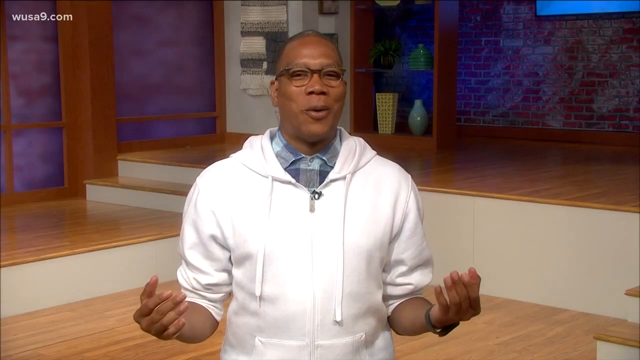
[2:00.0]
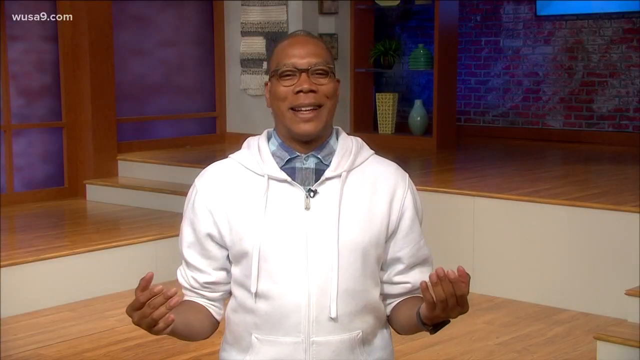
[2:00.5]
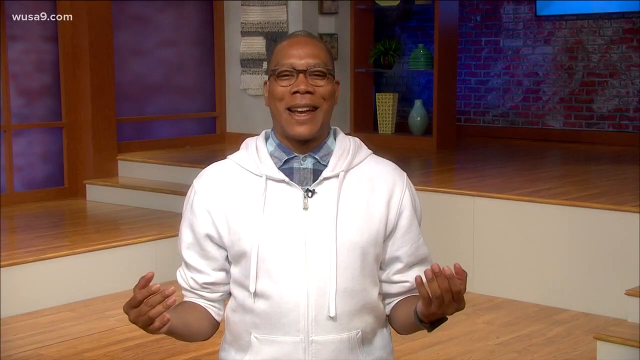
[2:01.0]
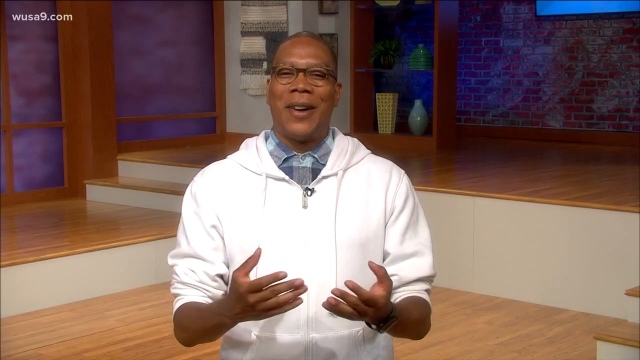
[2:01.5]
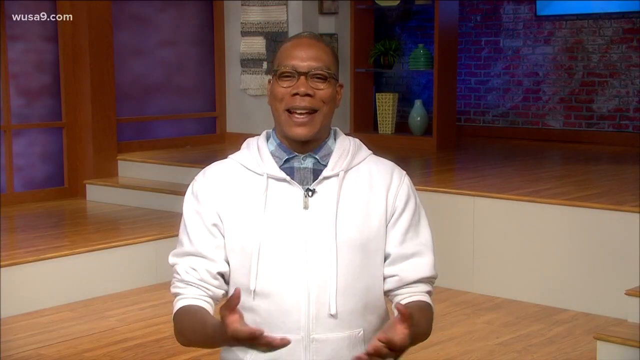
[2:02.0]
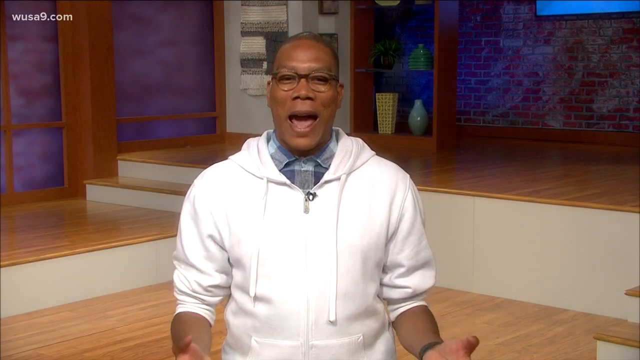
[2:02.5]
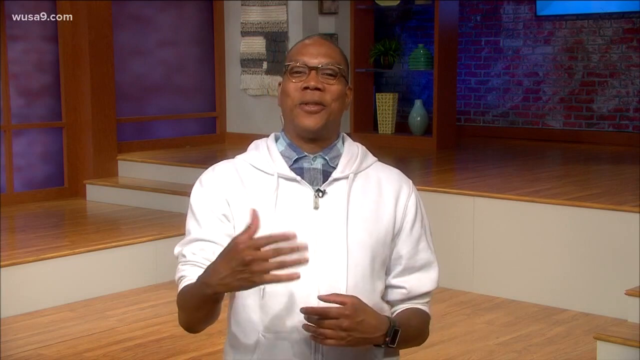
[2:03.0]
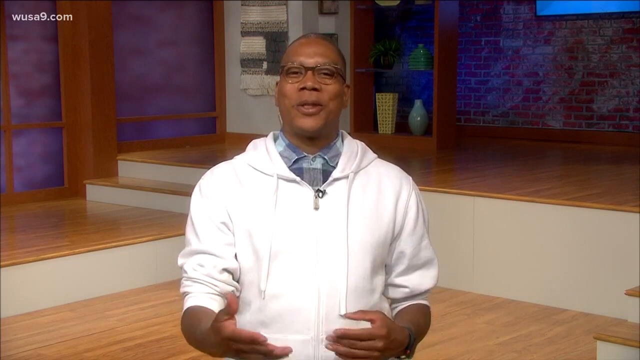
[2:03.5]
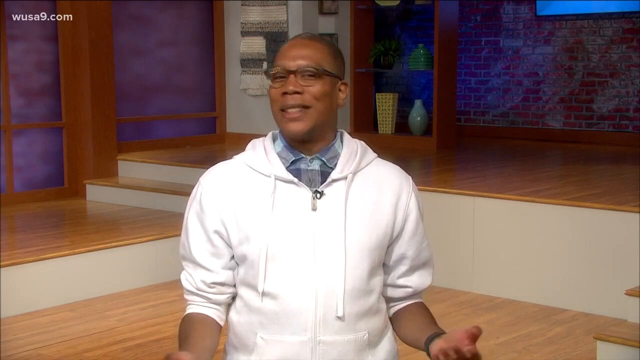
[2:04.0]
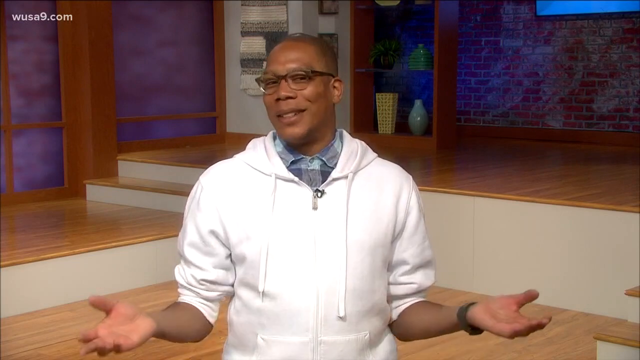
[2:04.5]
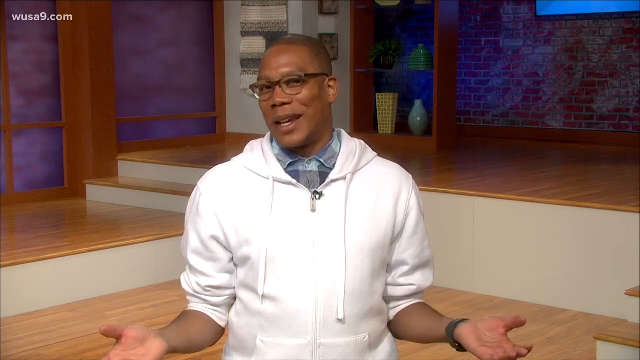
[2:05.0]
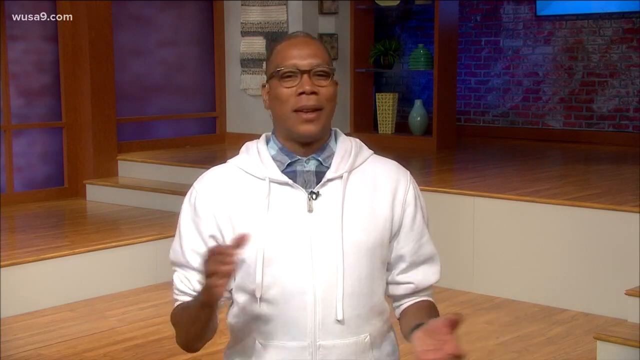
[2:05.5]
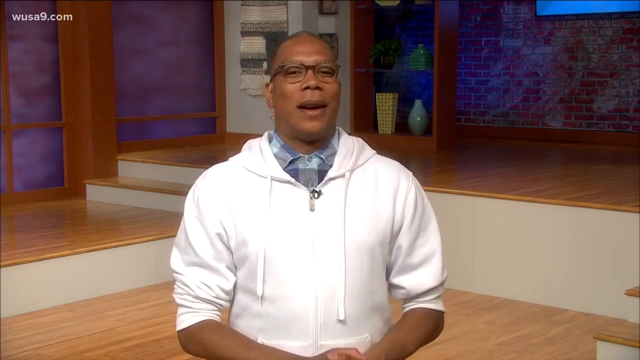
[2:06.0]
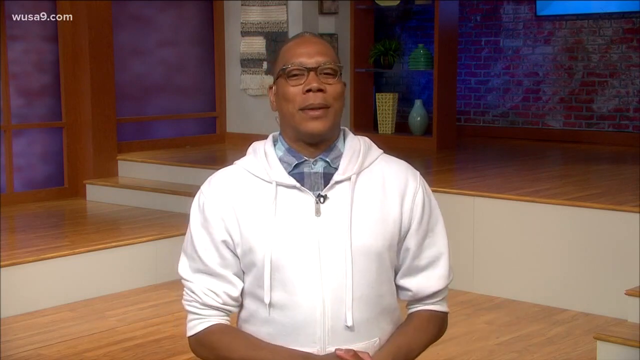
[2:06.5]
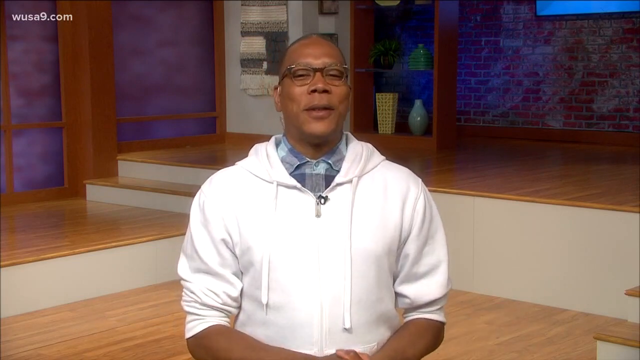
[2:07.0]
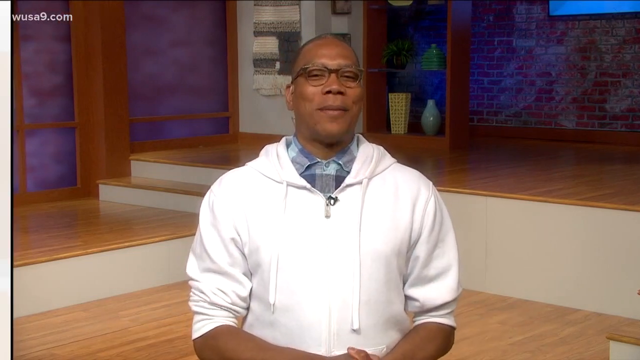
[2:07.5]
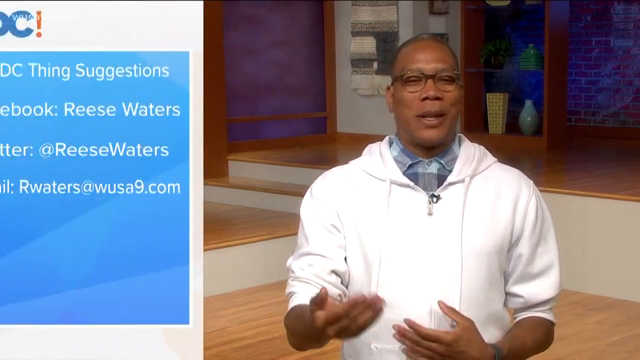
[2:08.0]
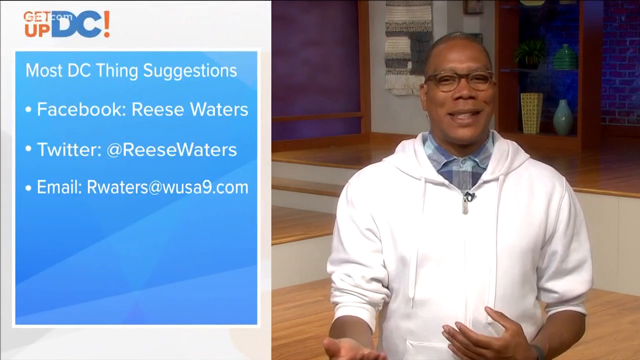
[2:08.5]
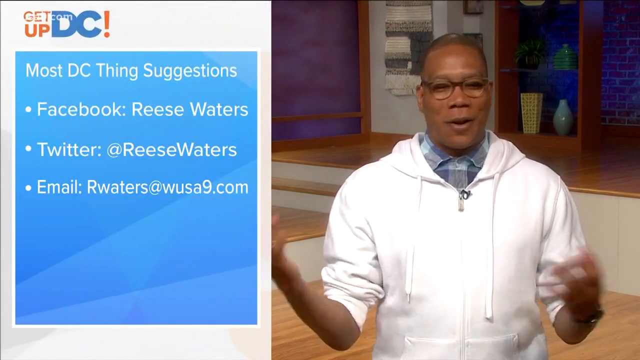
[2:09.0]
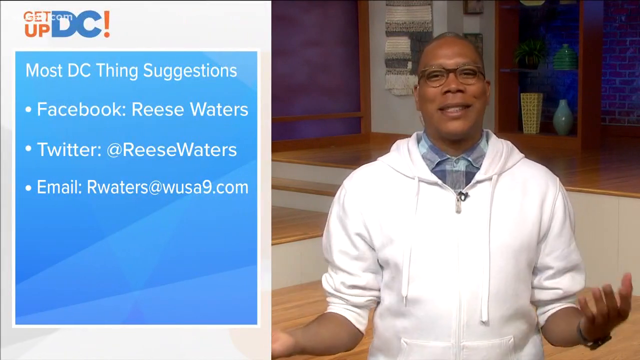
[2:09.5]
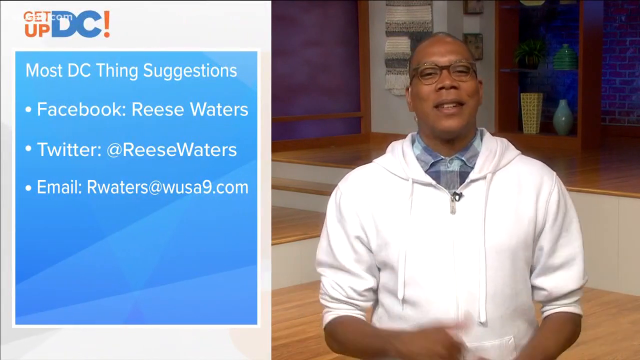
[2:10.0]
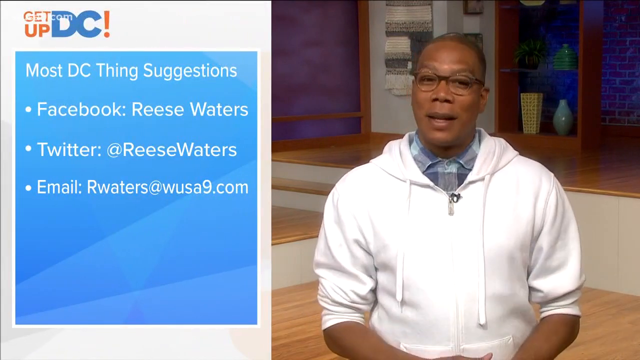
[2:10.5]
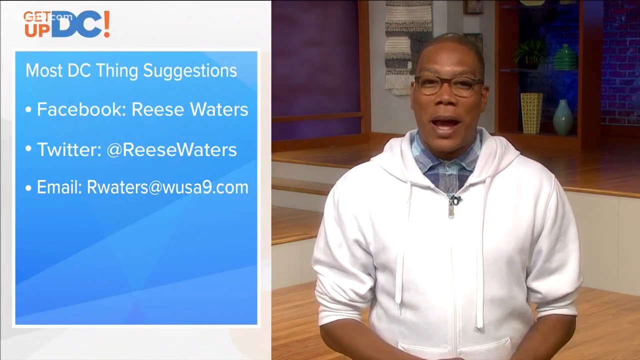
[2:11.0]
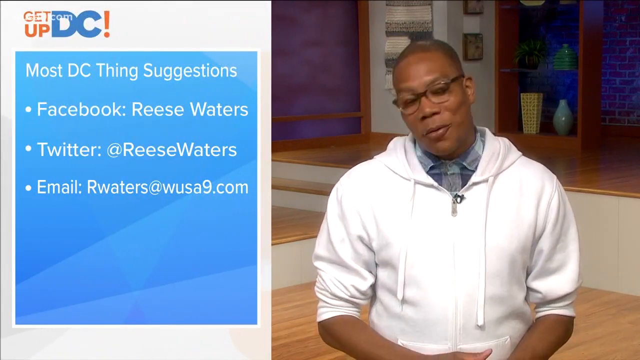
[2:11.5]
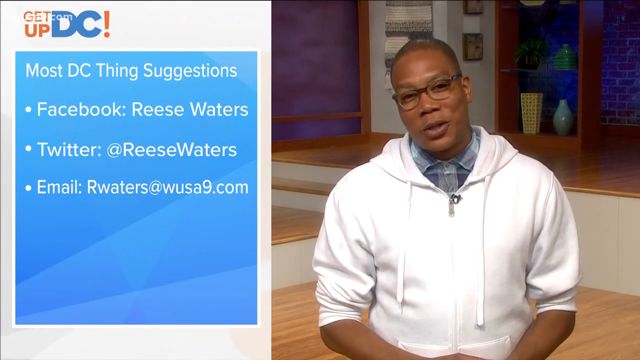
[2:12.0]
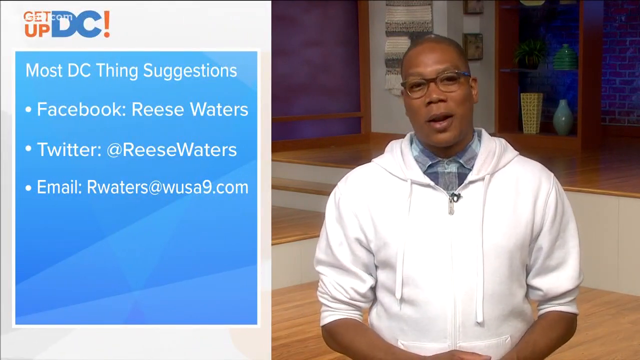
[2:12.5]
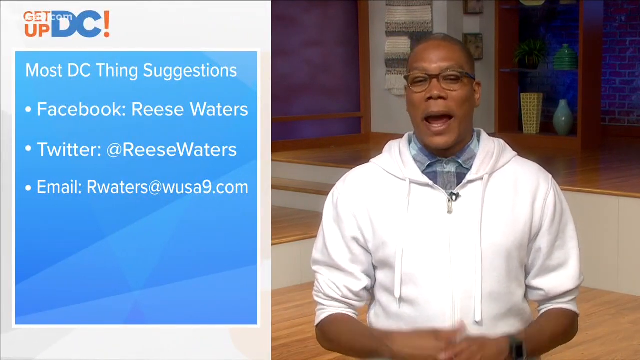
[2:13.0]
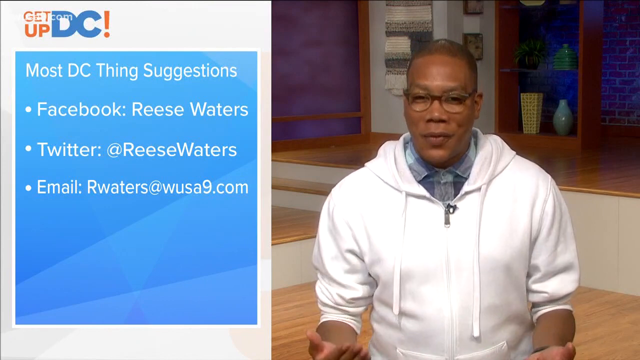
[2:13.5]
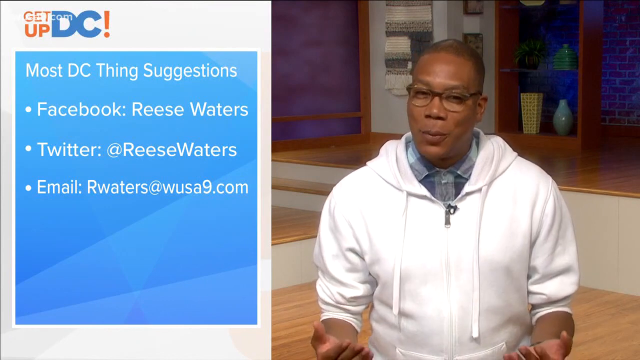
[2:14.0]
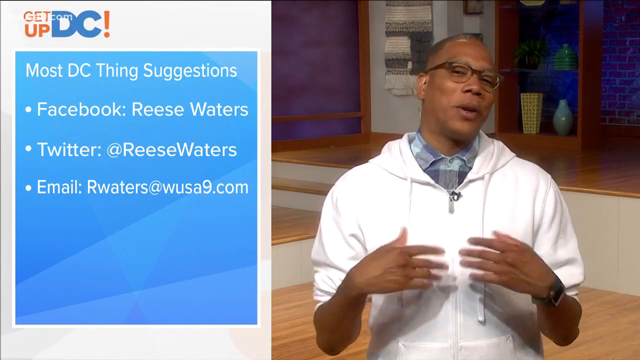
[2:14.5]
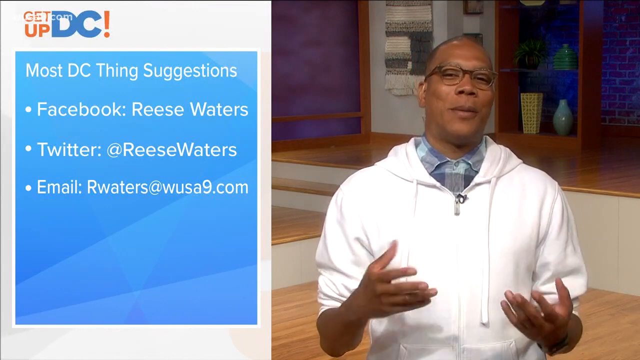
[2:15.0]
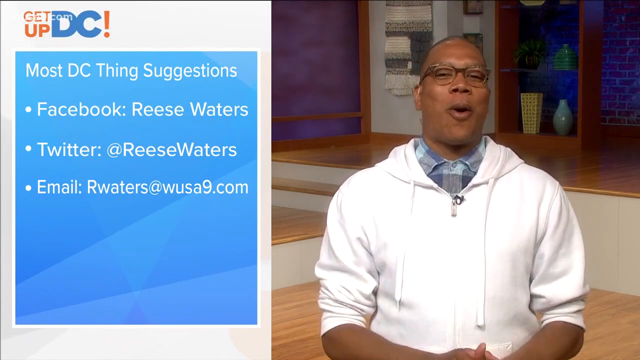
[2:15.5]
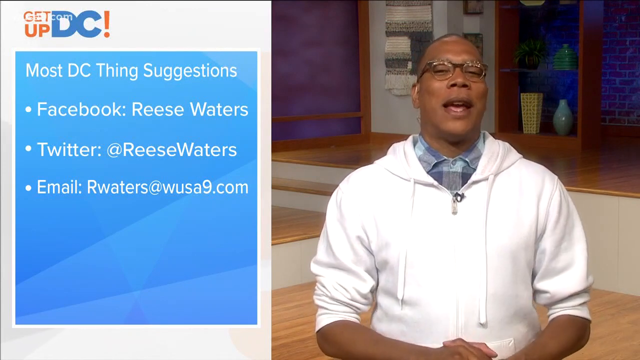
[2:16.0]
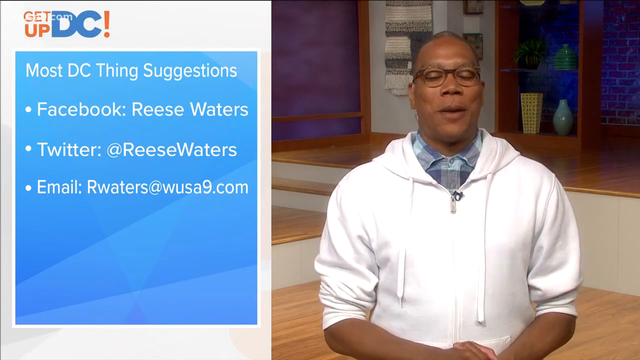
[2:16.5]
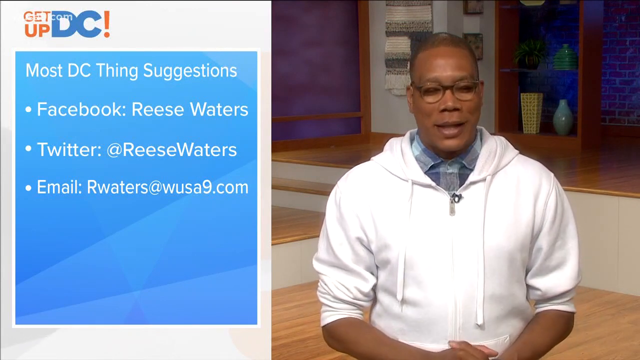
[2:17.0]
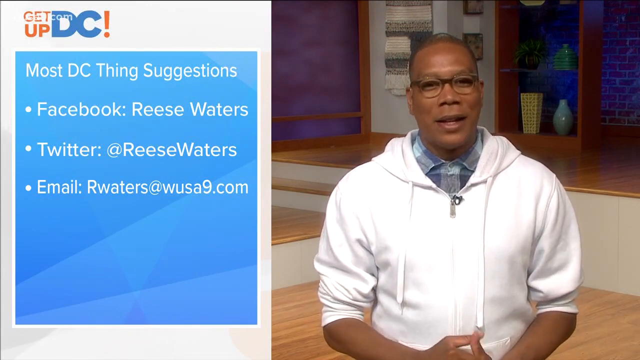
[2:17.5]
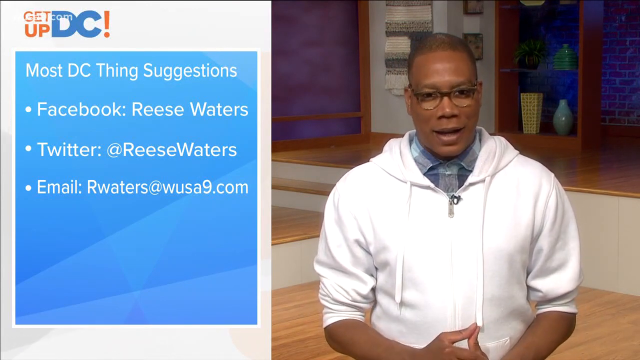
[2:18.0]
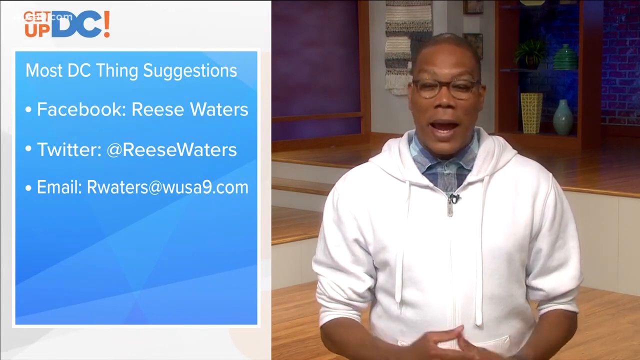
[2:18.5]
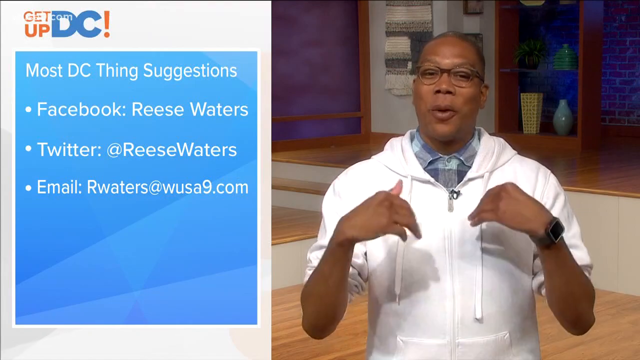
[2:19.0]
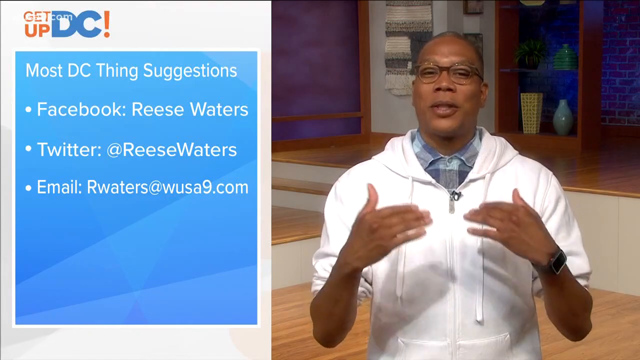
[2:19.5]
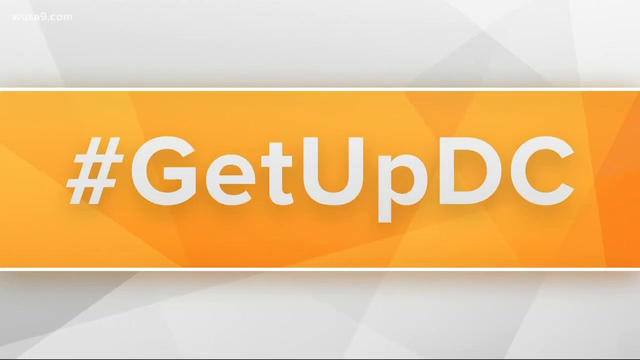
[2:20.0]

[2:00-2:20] The African-American man in eyeglasses talks while smiling and looking at the camera. He wears a white hoodie with the sleeves pulled up to his elbows over a blue checked shirt, and a wristwatch on his left hand. He is in a studio with a screen behind him. As he speaks he gestures with both hands, makes a gesture with his right hand suggesting forward movement, keeps nodding his head, puts his palms together, and then makes another gesture with his right hand. The screen then splits: on the left are the words 'most DC suggestions', and below them the host's contact details: Facebook Reese Waters, Twitter @ReeseWaters, and email rwaters@wusa9.com. At the top of the screen are the words 'get up DC!'. On the right side, the man continues to talk, leaning slightly forward and then leaning back.